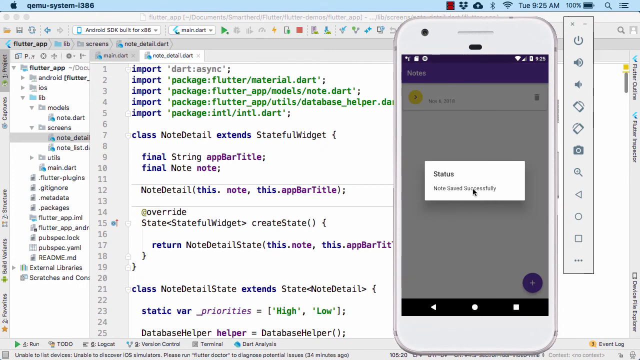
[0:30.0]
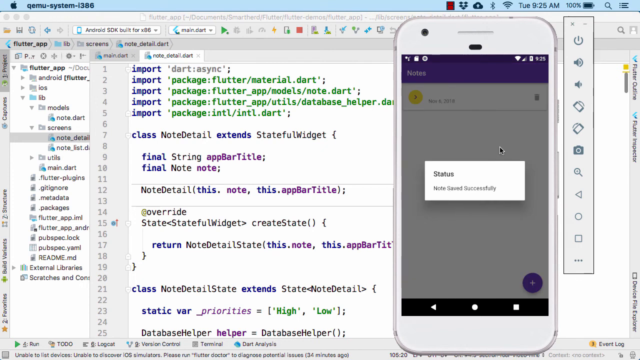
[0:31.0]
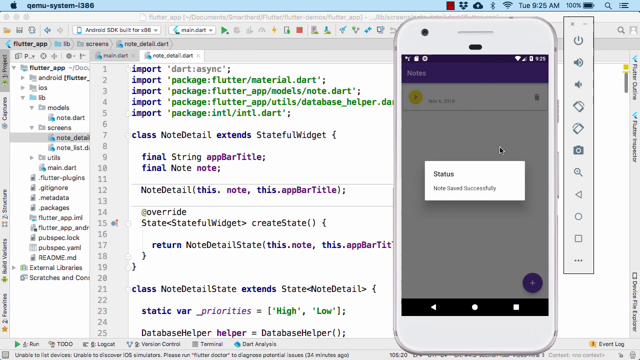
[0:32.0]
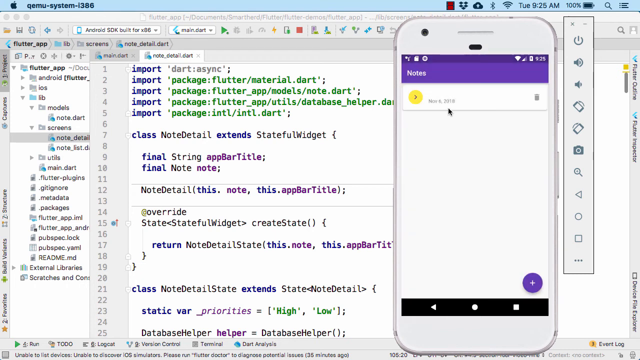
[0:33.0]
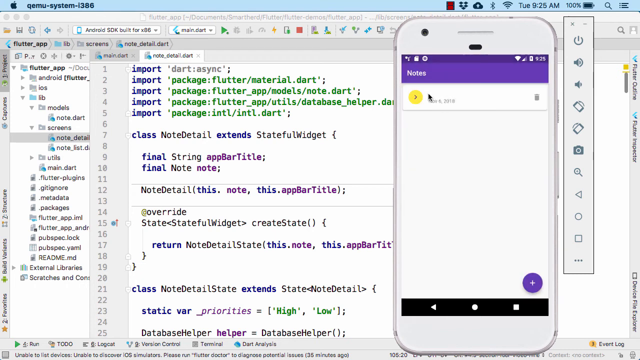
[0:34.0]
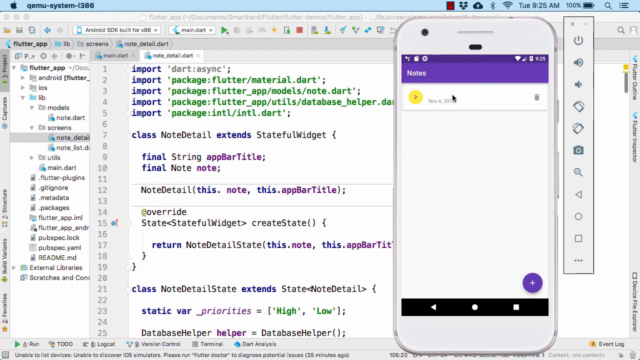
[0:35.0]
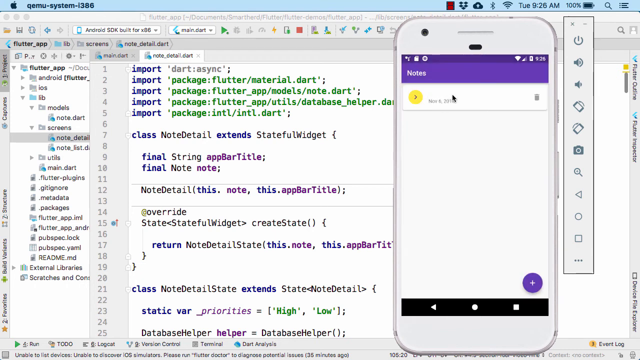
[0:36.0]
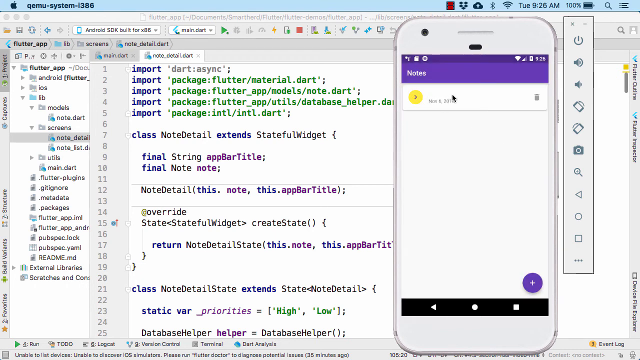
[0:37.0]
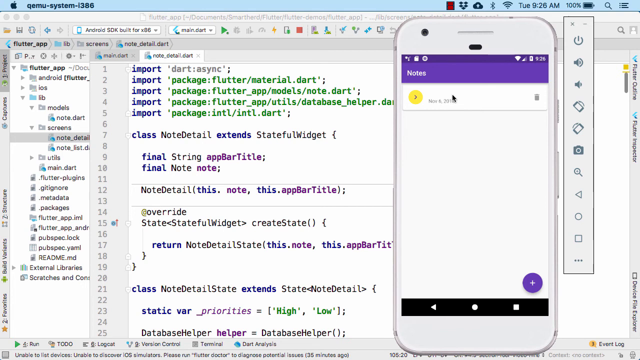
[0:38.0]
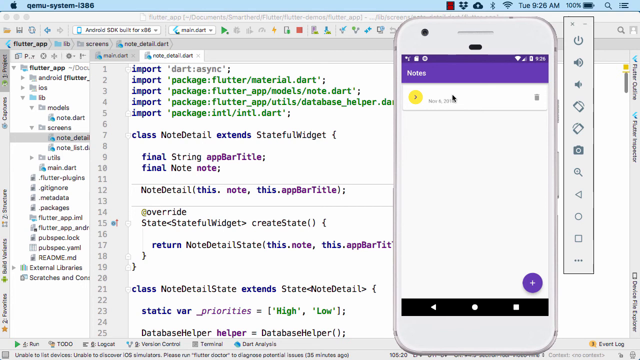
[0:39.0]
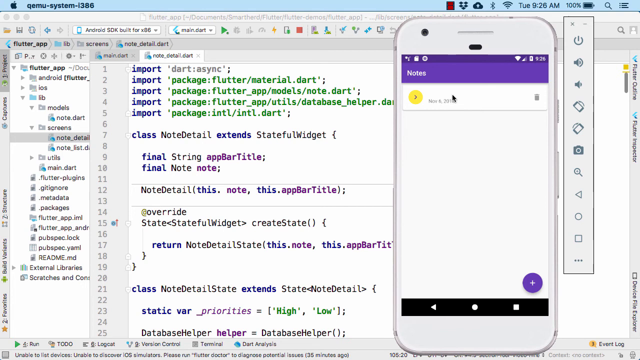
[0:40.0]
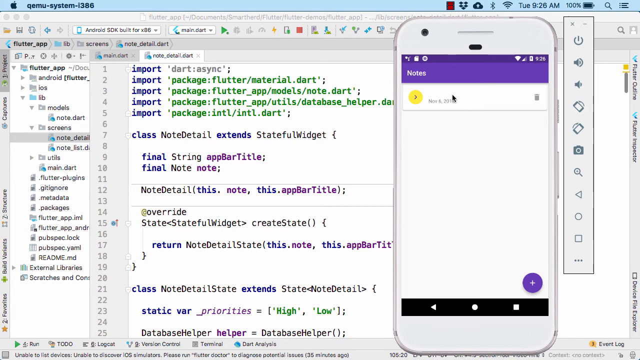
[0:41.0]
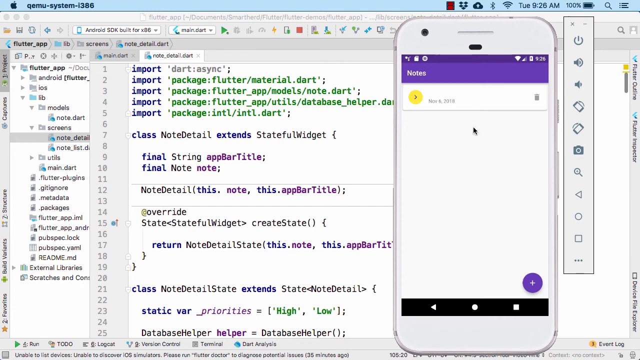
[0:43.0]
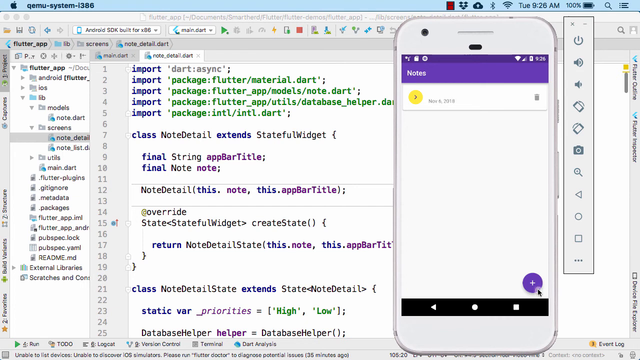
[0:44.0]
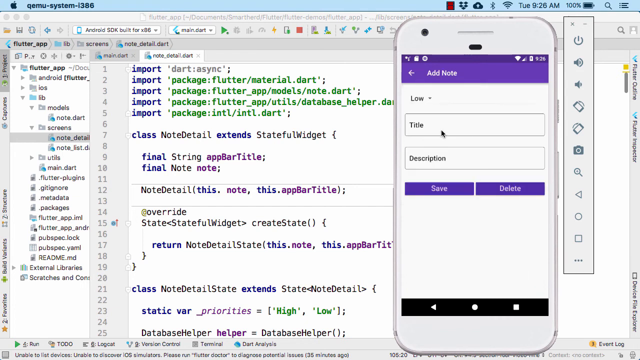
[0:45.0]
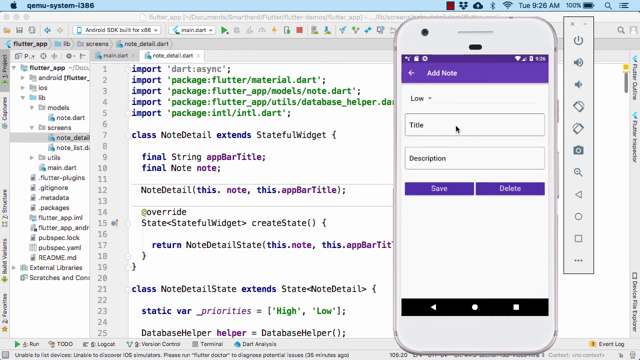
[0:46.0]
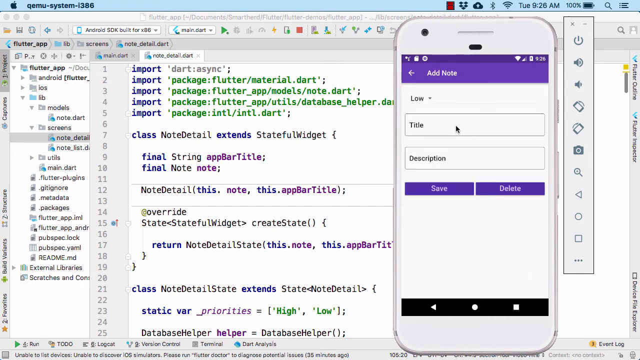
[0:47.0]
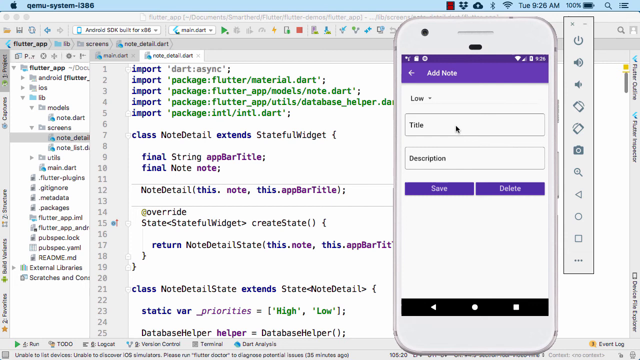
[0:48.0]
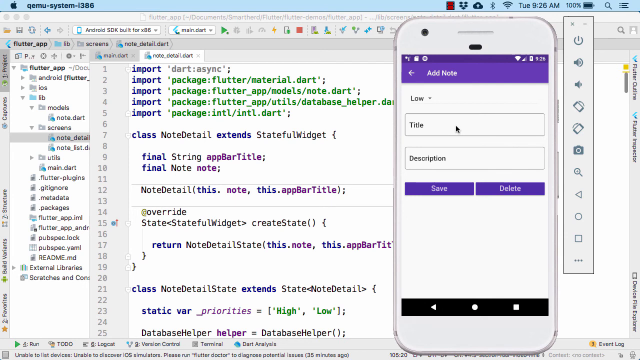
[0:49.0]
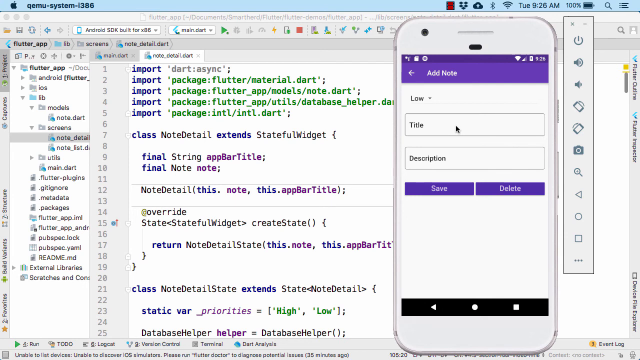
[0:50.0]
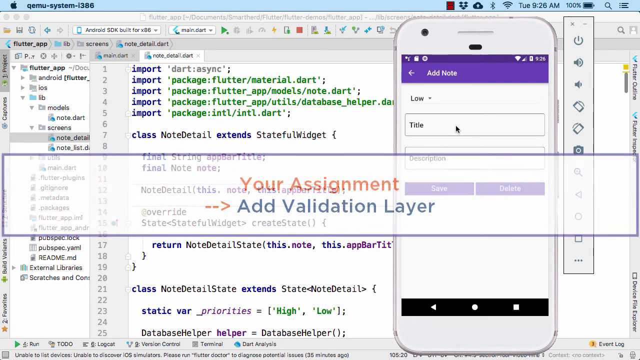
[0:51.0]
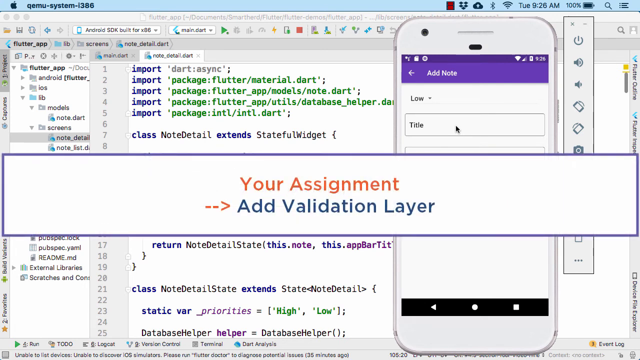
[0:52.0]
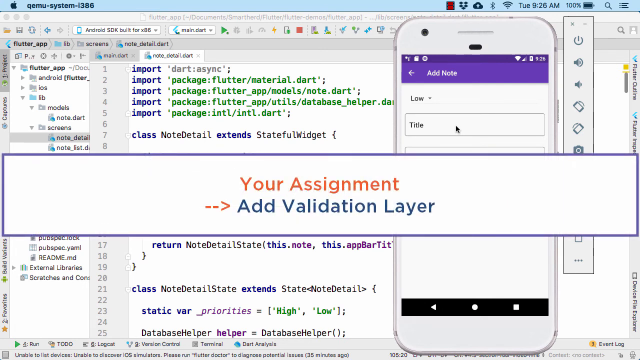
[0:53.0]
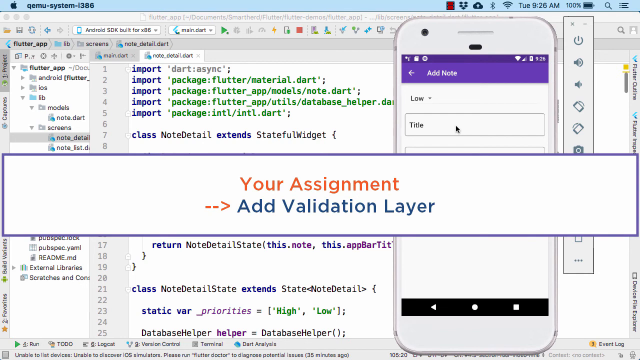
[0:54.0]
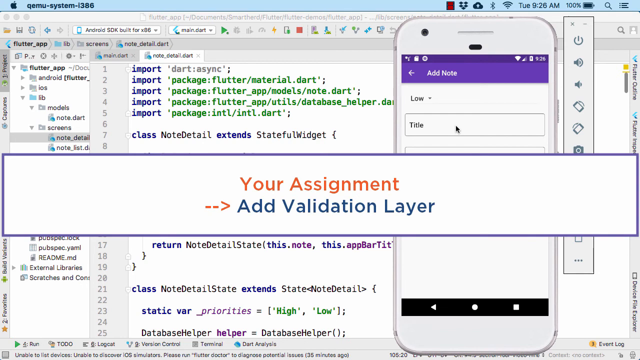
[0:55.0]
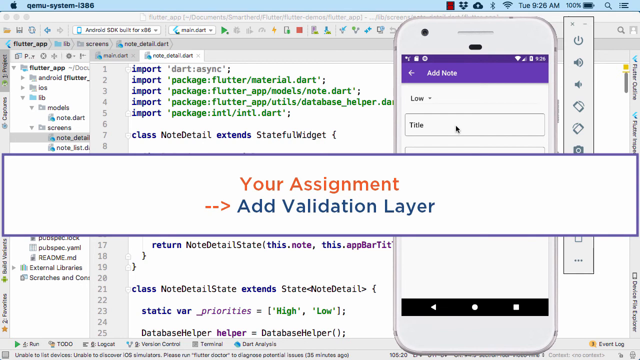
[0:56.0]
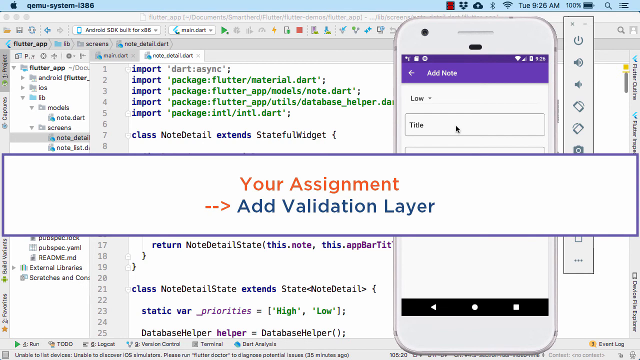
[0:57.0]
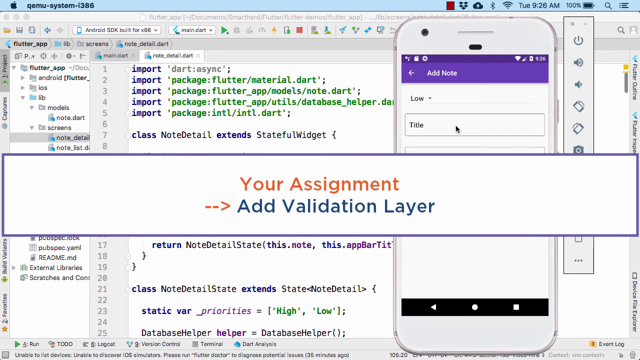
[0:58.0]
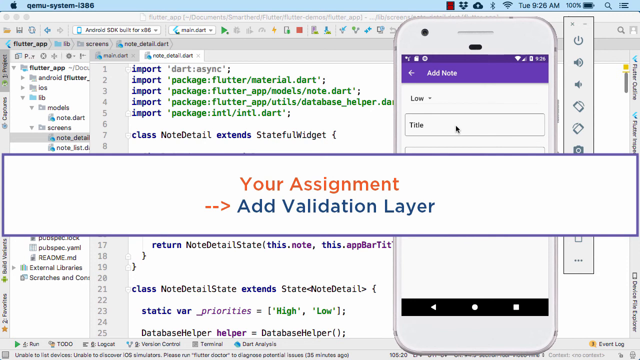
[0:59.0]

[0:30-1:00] The person doing the demonstration again goes to the bottom right of the phone screen and clicks the plus to bring up the notes screen again. Once the notes screen loads, they seem to be describing something for a little while. Below the title field are the description and save and delete buttons. Finally, the slide shows a message about validation that says "your assignment add validation layer."